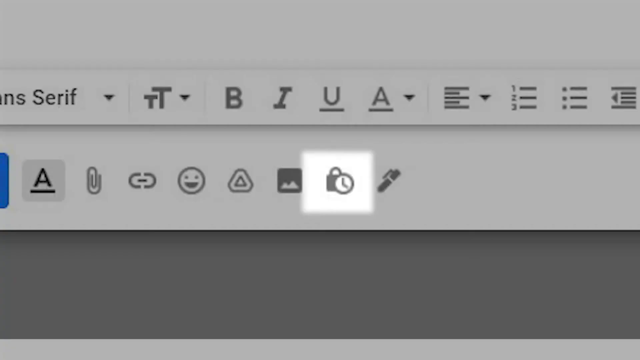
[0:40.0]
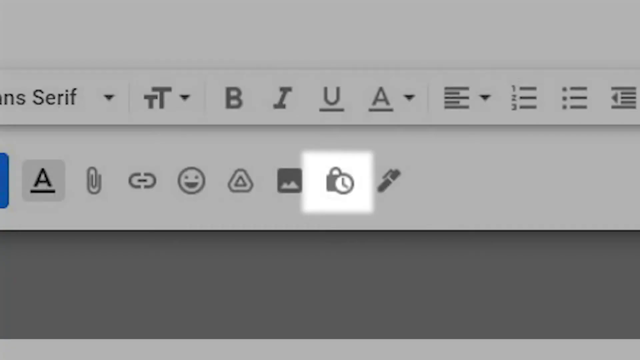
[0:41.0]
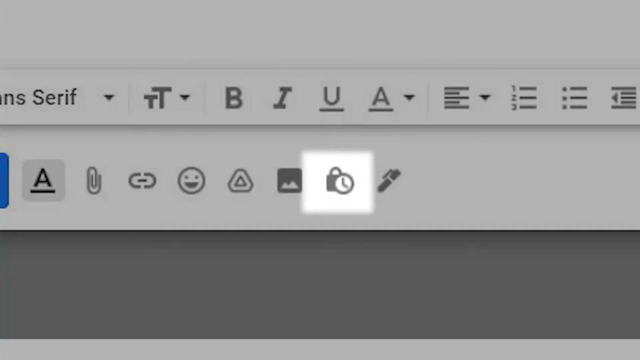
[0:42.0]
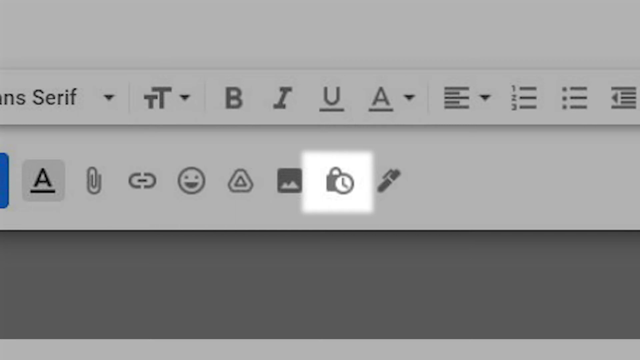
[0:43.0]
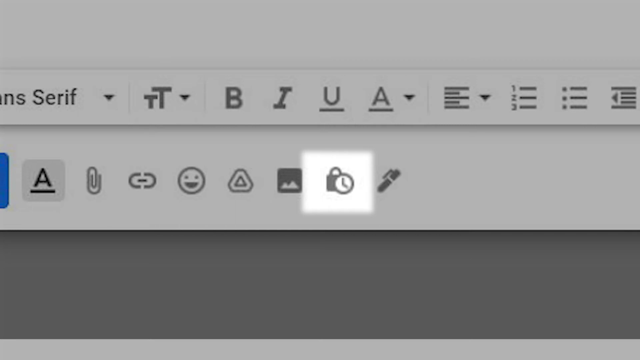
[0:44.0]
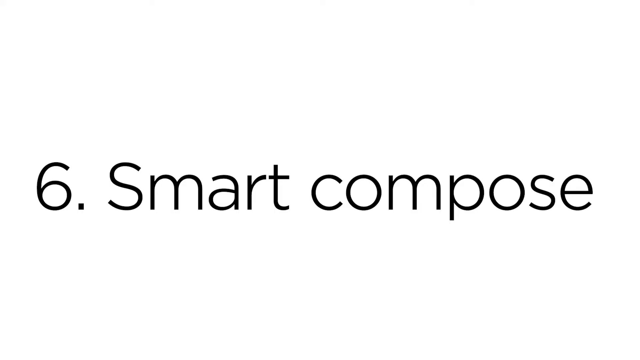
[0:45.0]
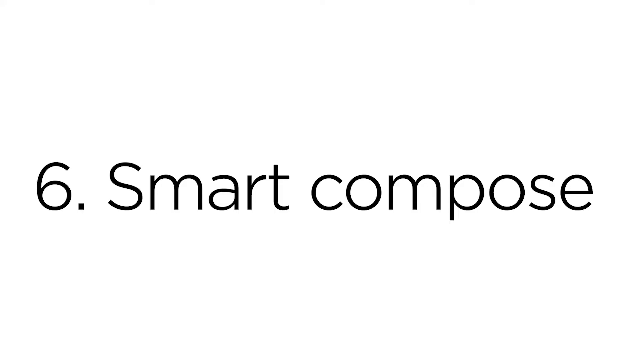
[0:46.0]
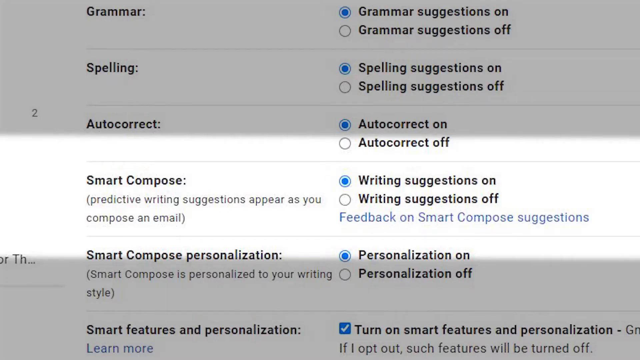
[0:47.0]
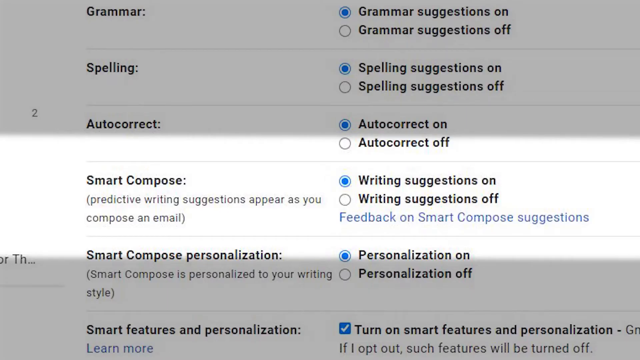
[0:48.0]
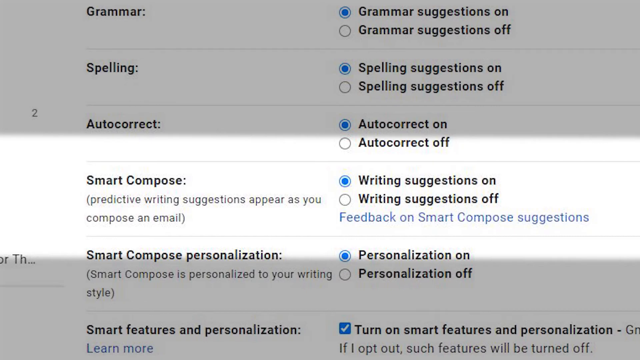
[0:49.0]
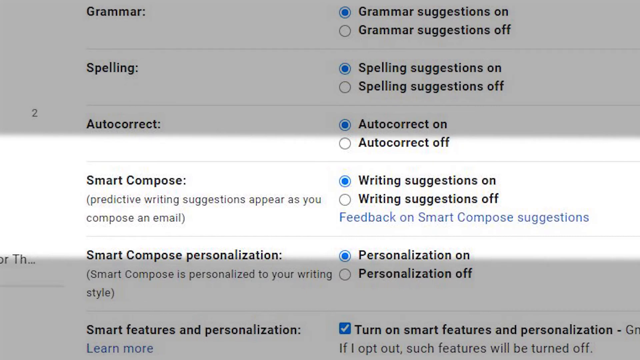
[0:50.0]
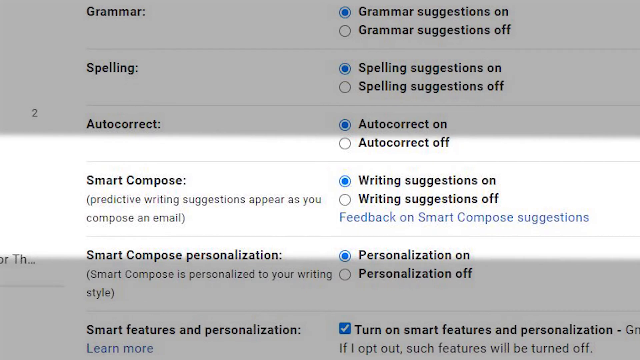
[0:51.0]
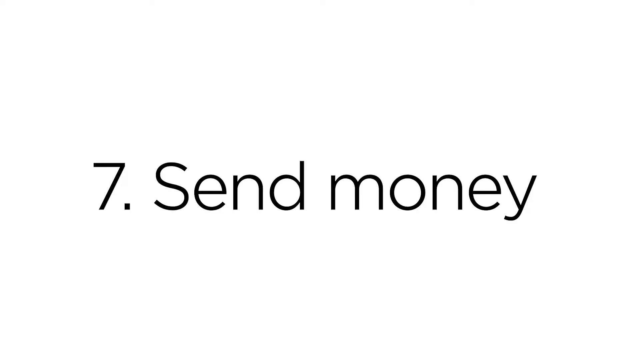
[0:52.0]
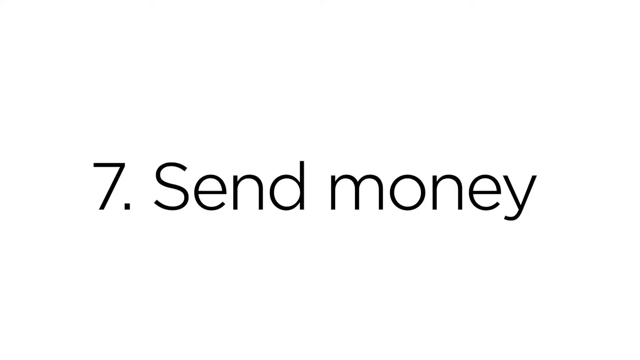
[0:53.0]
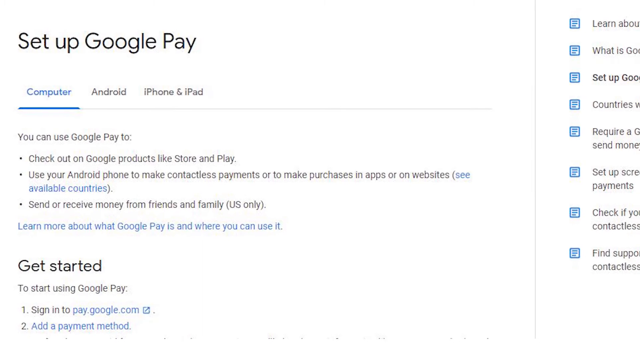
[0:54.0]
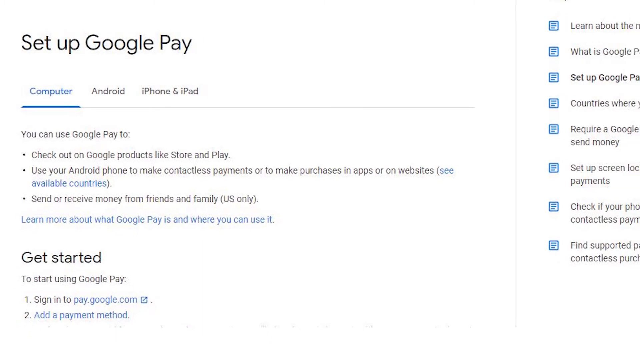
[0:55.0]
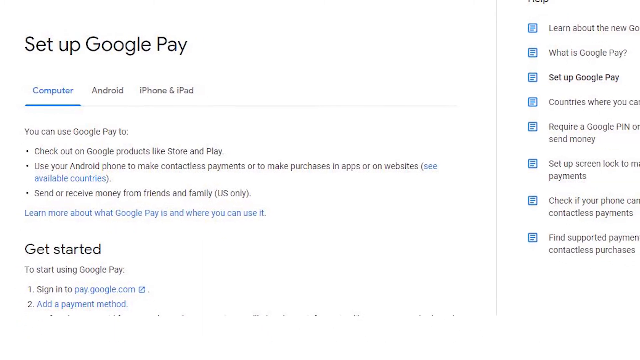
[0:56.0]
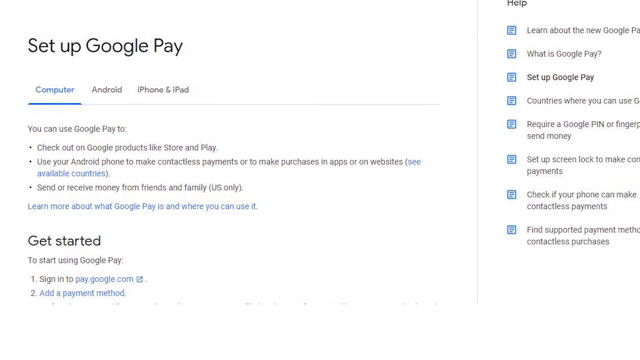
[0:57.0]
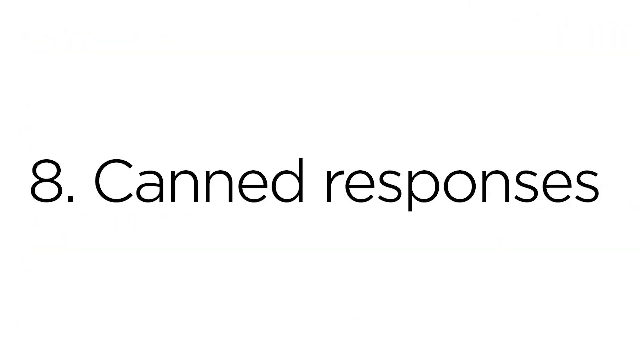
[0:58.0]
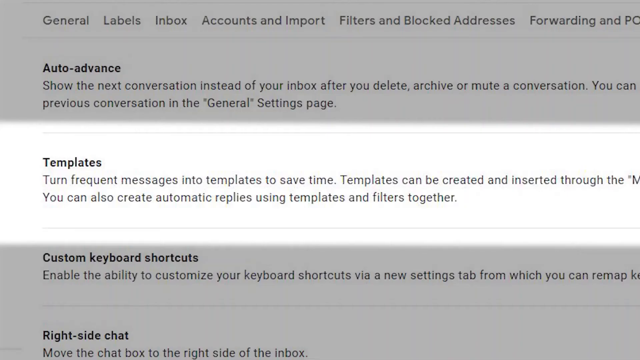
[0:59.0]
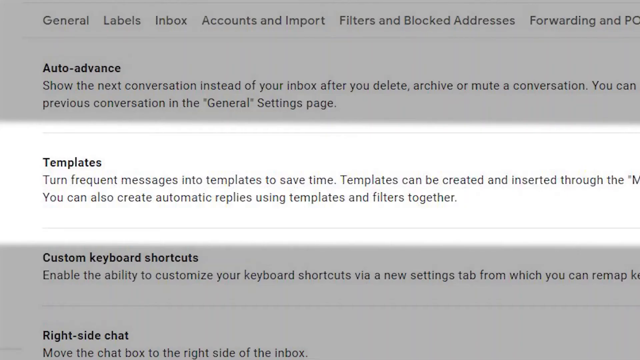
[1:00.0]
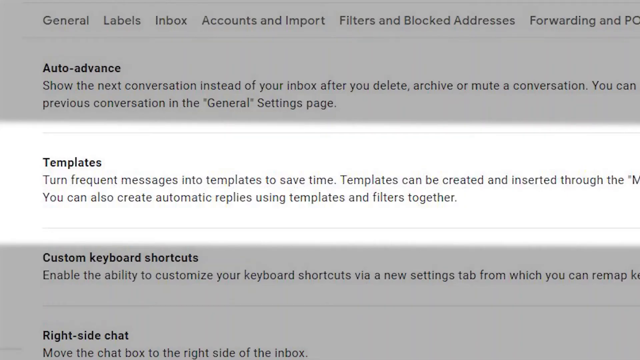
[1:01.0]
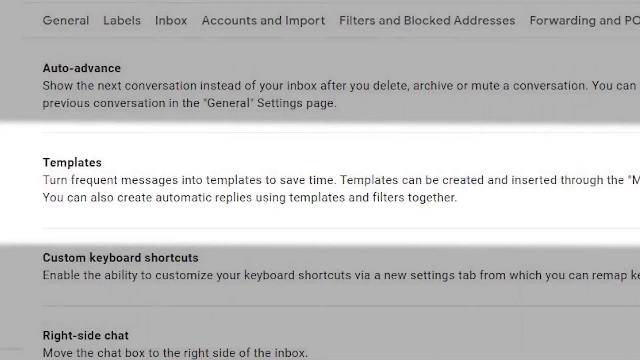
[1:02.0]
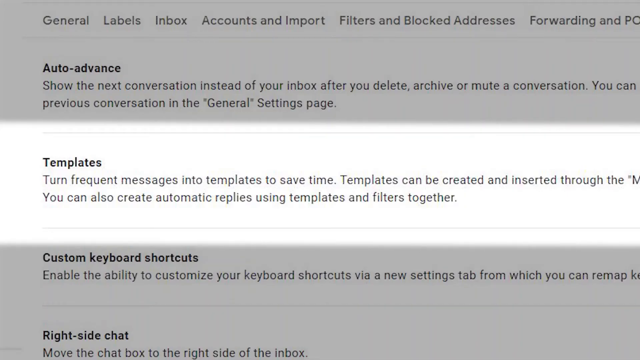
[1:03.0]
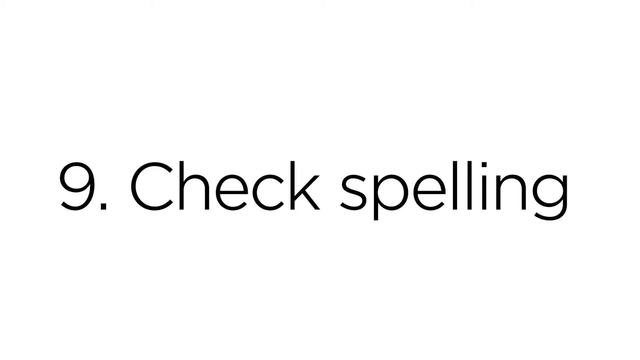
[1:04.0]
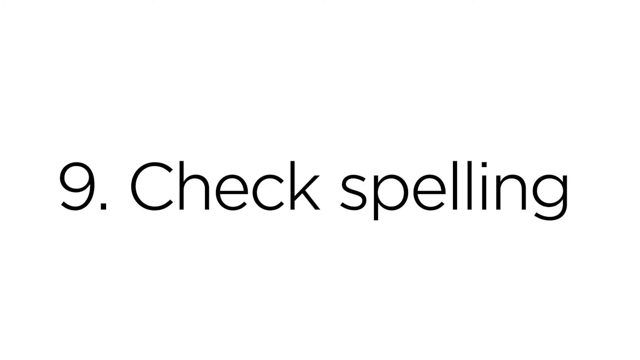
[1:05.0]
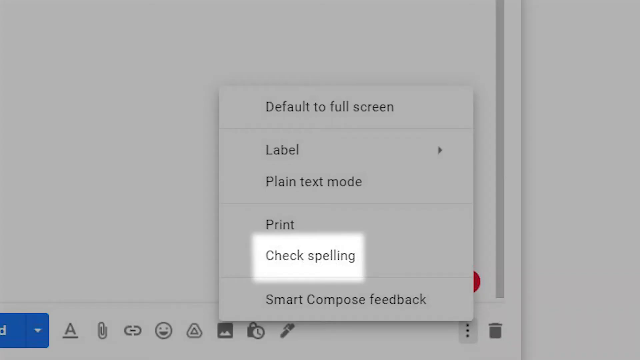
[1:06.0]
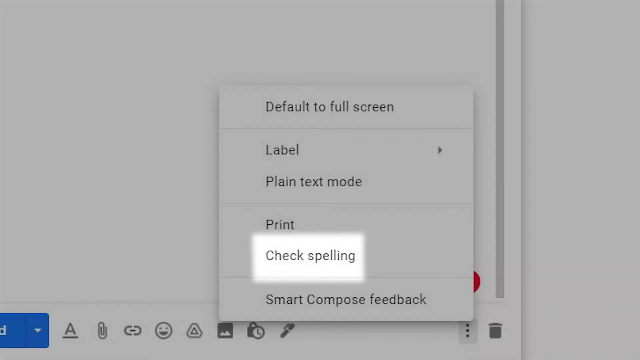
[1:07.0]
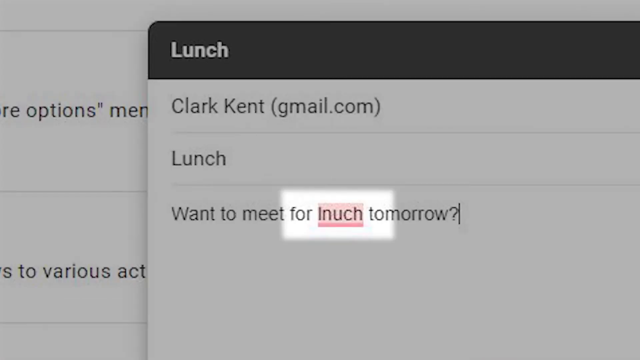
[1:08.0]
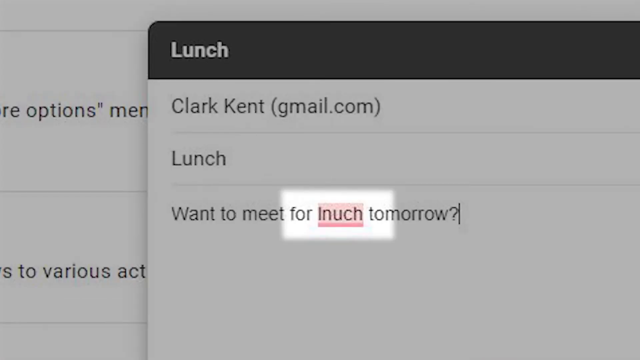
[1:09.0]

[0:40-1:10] In the Gmail settings at the top, a small symbol with a lock and a clock on it is highlighted; it appears normal while the rest of the screen has a low-opacity black filter. A white background then reads "6 smart compose". The smart compose setting appears with two options, writing suggestions on or off, and the user has it set to on; this is shown in normal view while the other settings have a low-opacity black filter over them. Another white screen shows the number 7 and "send money", followed by a set up Google Pay screen as the camera slowly zooms out to view all the information on the page. A white screen then reads "8 canned responses", followed by a highlighted view of templates with low-opacity black over the rest of the screen. Another white screen reads "9 check spelling". Part of a screen shows a few options from a pop-up menu with check spelling highlighted, and the rest of the screen has low-opacity black over it. Next, an email is being composed with the subject "lunch" and the name Clark Kent. The body reads "want to meet for lunch tomorrow", with lunch misspelled as "lnuch", underlined in red with a red highlight over it. A normally colored square surrounds this word, while everything outside it is low-opacity black to focus on the misspelled word. Just before the end, a white background shows the number 10 and "preview messages".